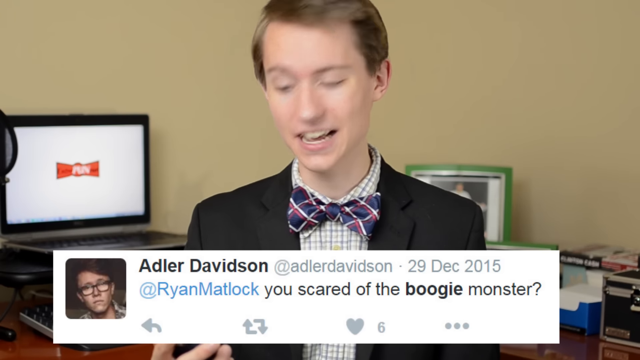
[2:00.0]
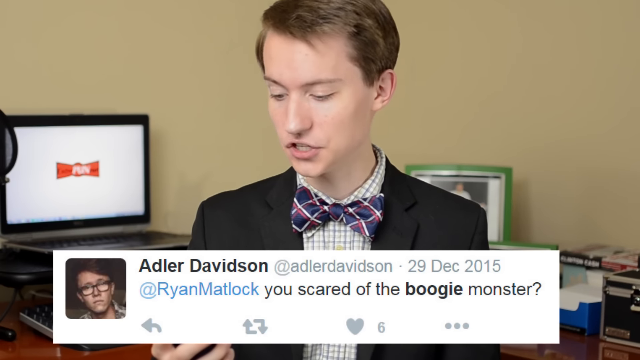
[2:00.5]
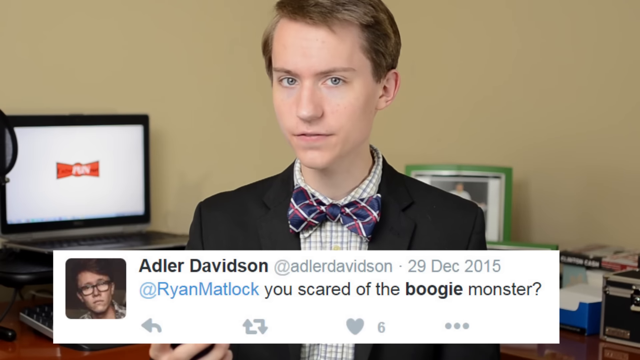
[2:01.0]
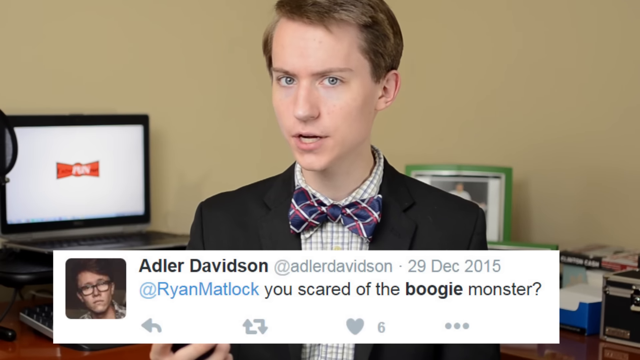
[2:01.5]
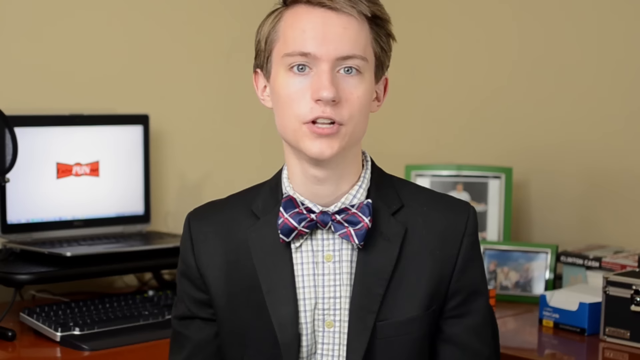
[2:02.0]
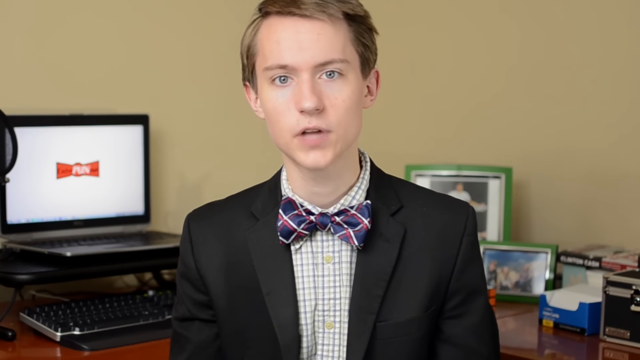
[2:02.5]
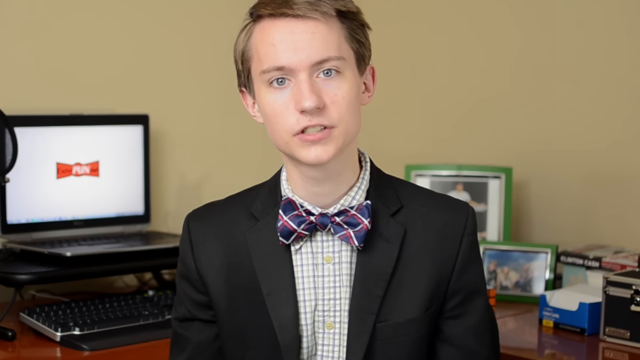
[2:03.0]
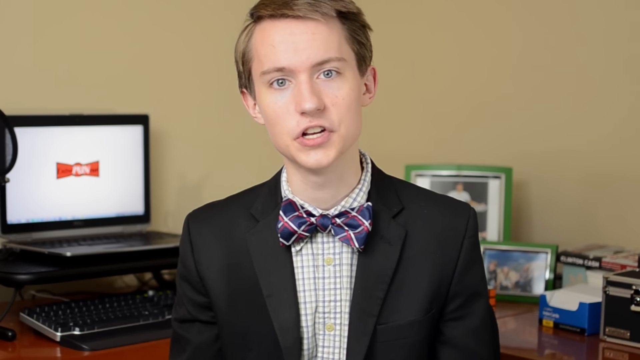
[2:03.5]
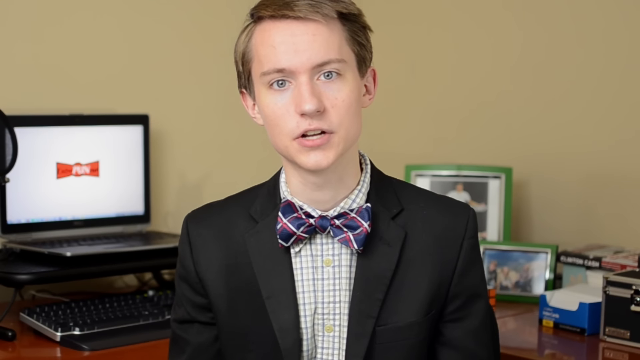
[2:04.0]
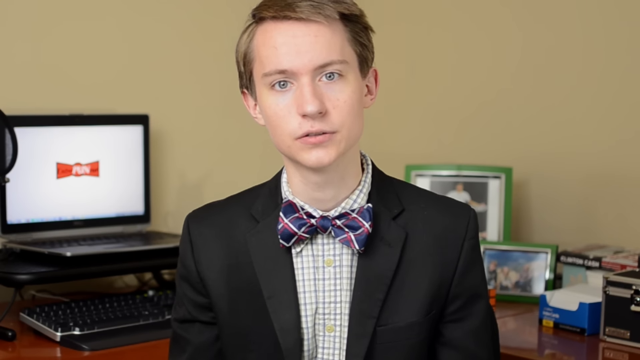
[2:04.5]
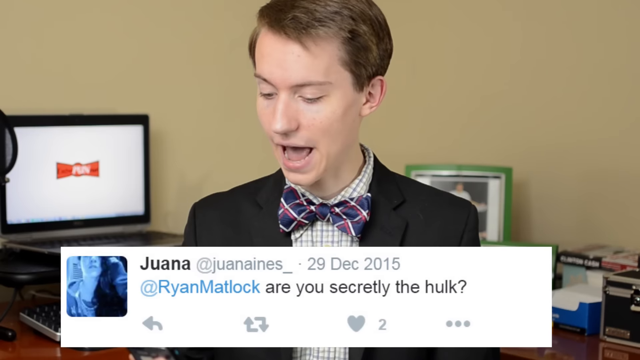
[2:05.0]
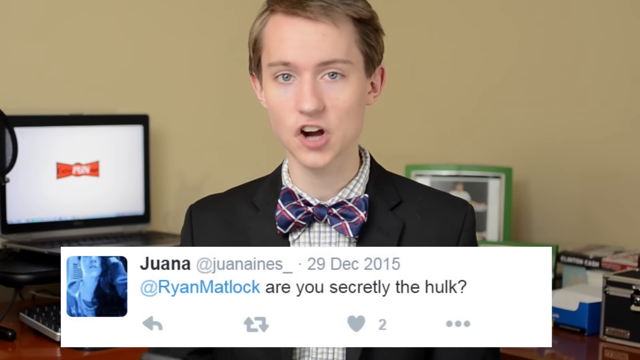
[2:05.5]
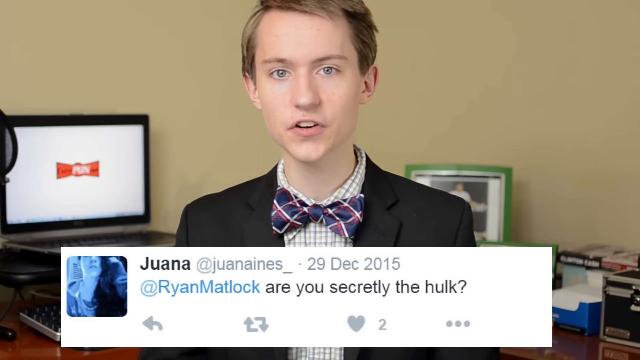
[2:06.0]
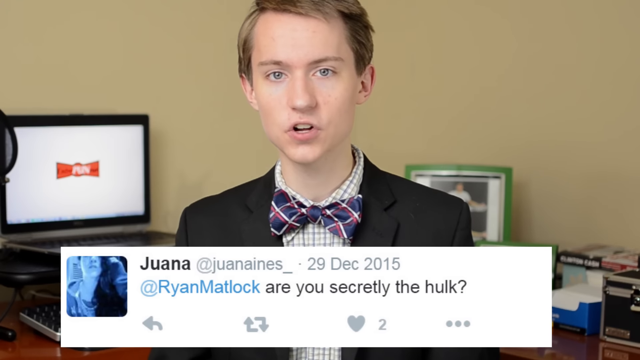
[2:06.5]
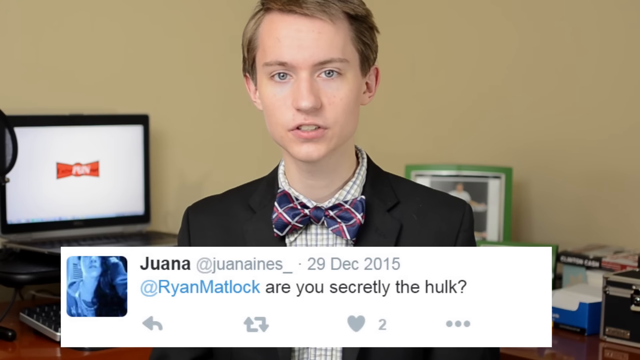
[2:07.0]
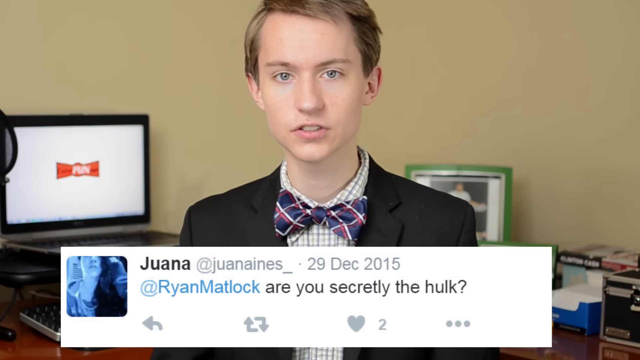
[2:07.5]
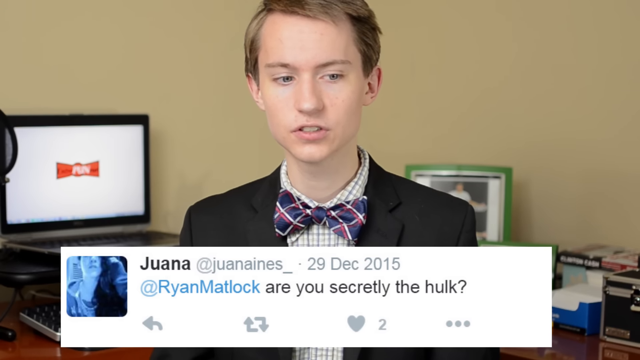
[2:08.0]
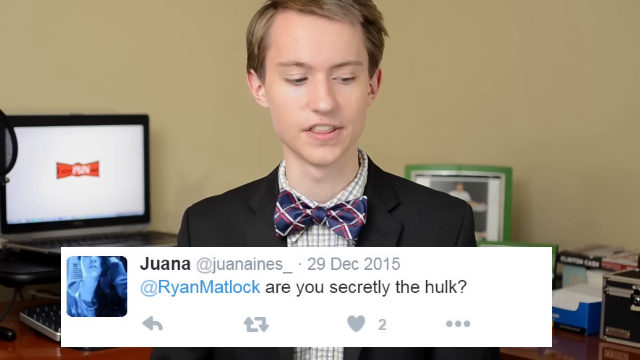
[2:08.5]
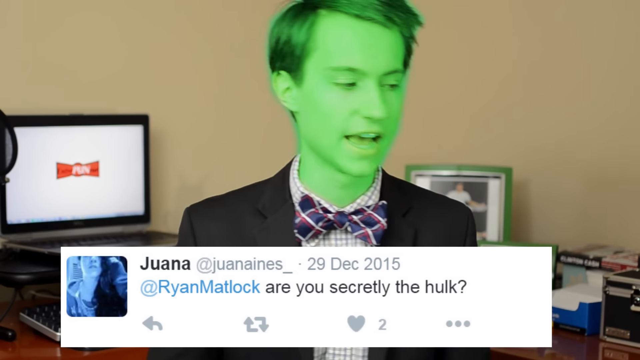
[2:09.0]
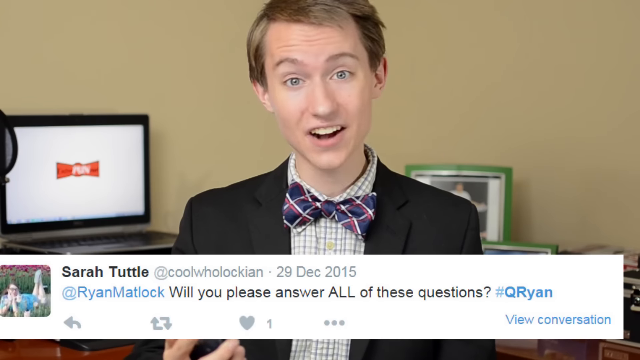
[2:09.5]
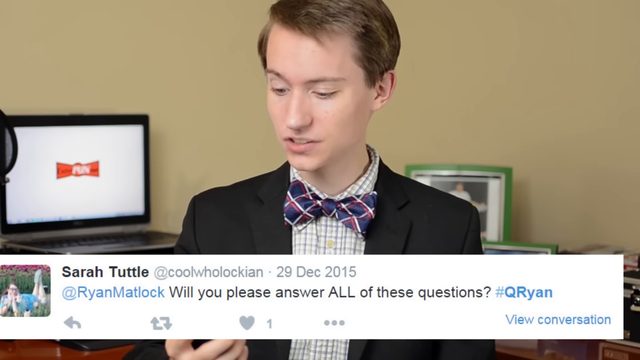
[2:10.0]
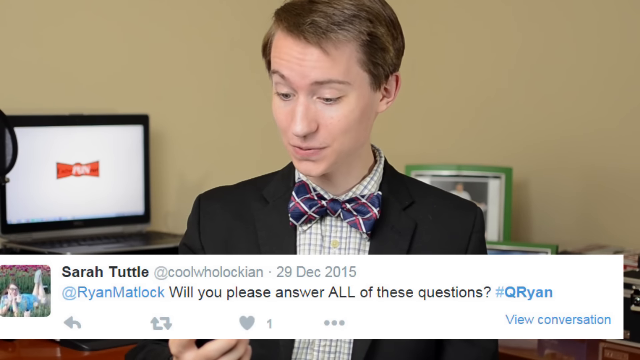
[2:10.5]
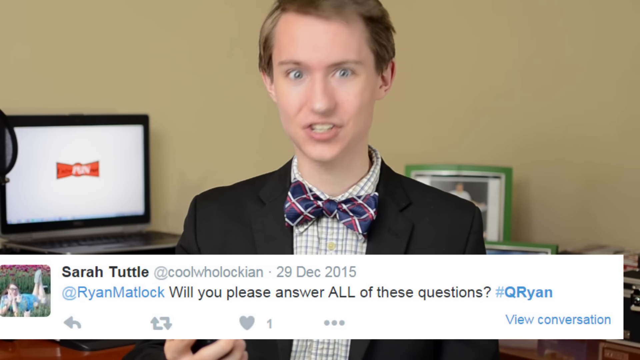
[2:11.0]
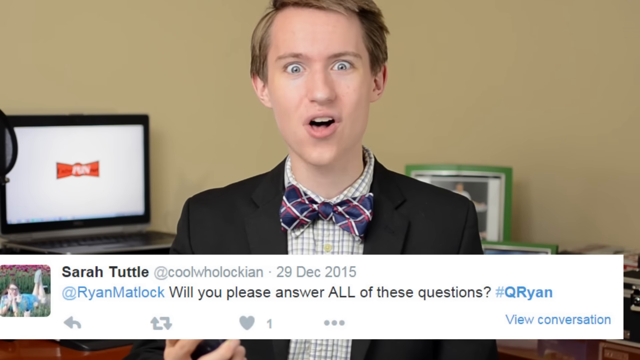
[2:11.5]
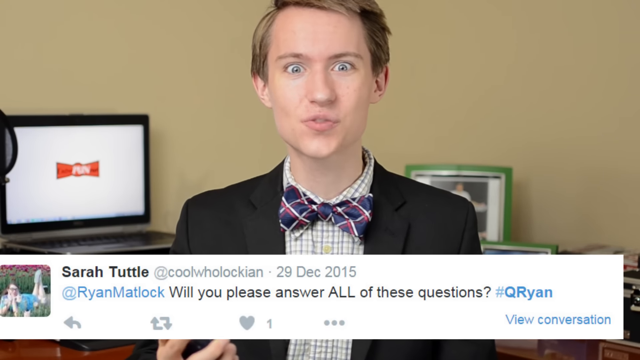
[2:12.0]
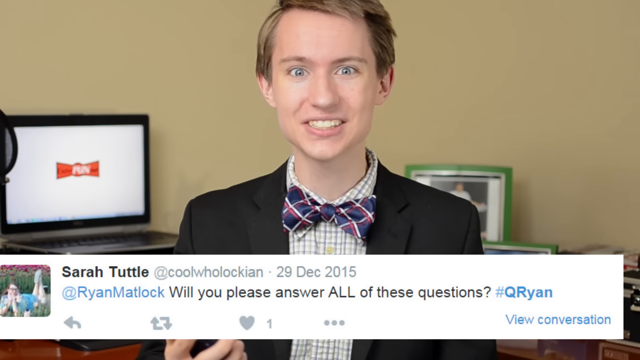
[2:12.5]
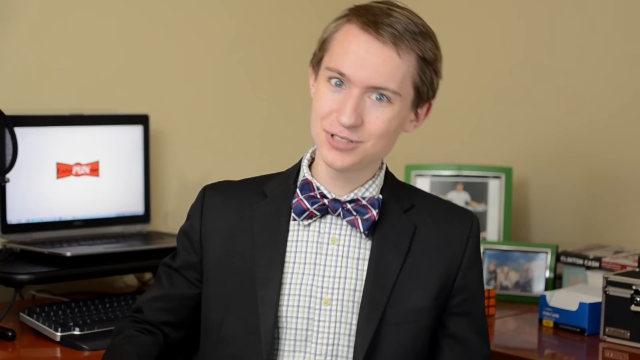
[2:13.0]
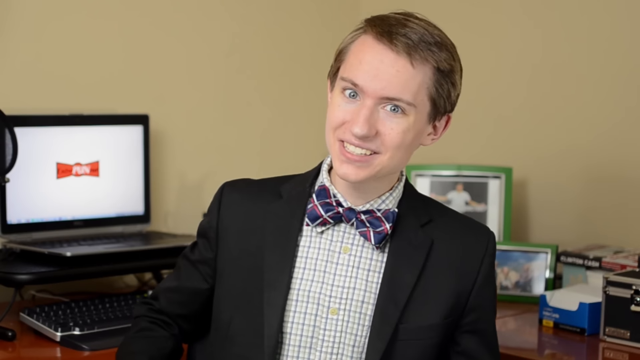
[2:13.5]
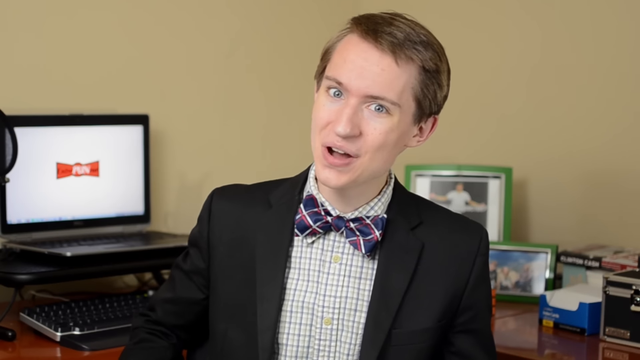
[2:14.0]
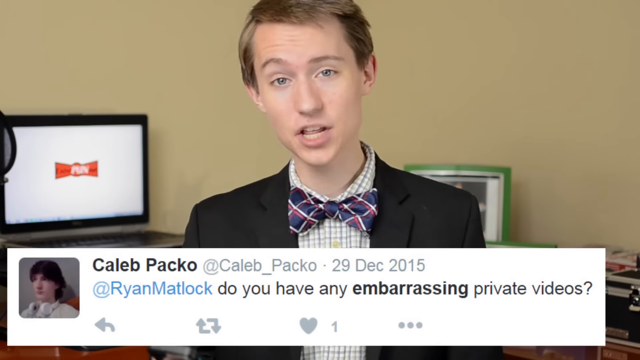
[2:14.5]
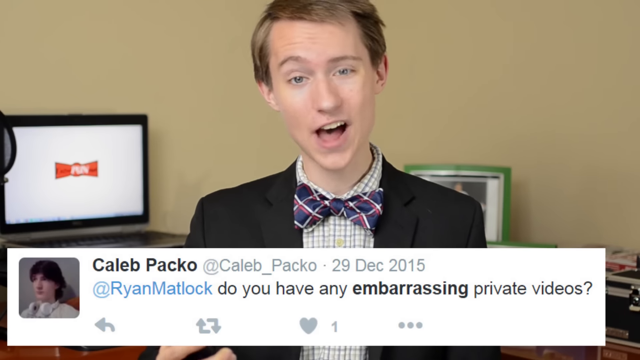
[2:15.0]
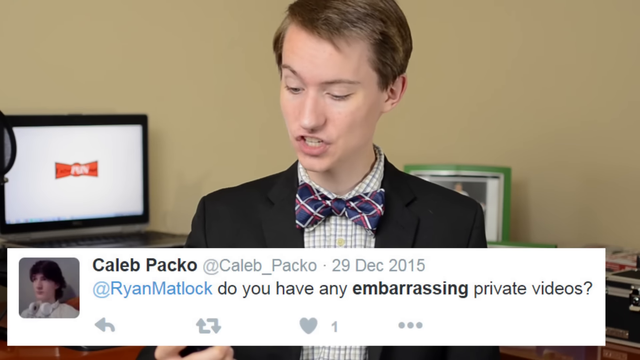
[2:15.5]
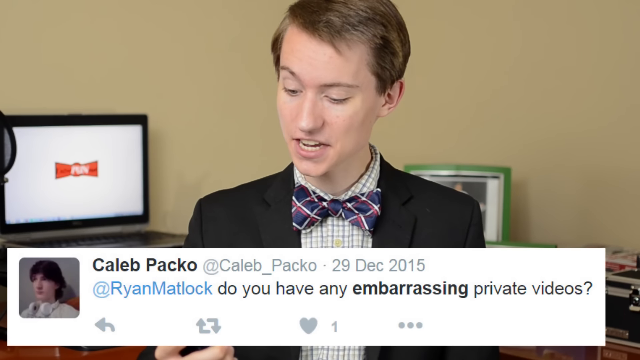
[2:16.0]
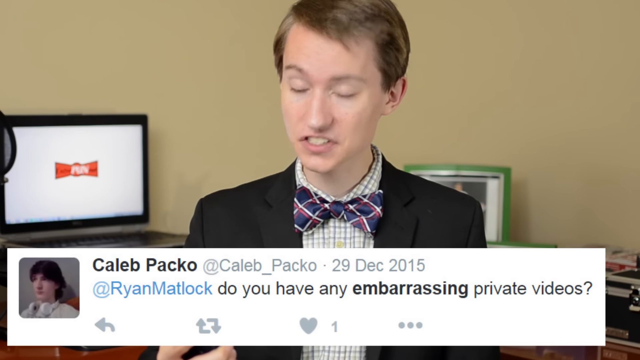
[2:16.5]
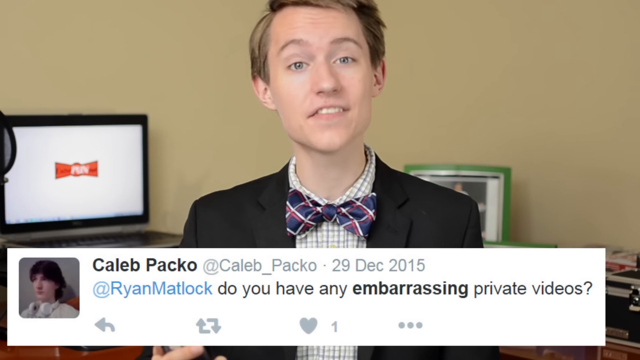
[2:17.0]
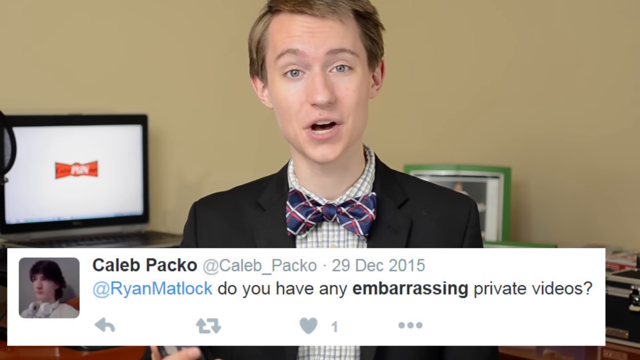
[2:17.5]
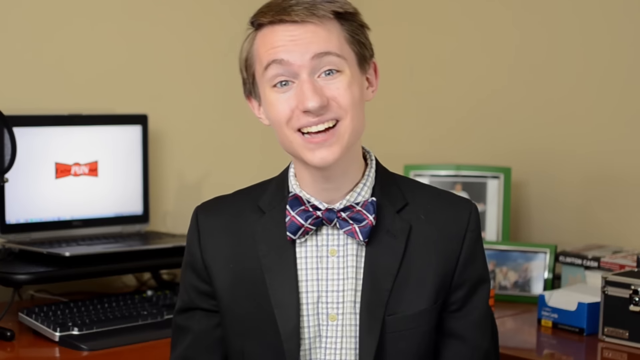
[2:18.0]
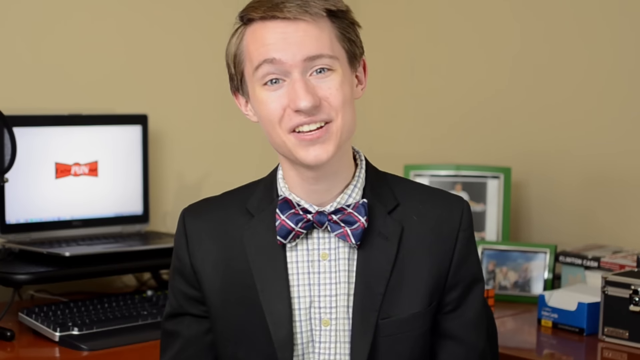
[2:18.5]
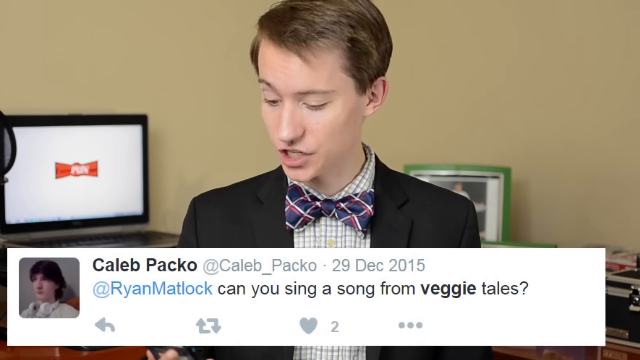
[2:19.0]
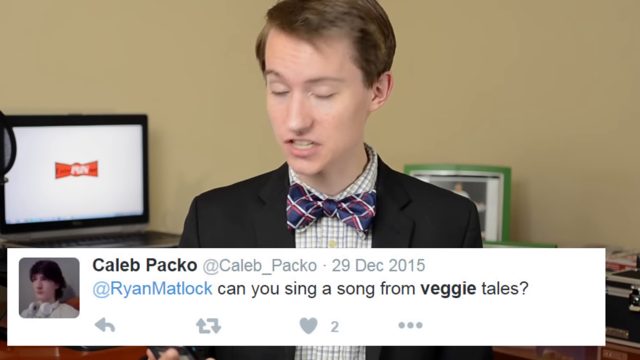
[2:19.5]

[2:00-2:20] In the same location, the young white man in his 20s, with short brown hair combed to the right, wears a black suit jacket, a white button-up dress shirt with gray stripes, and a dark blue bow tie with white and red stripes. A white rectangular box at the very bottom contains an image of a tweet: the name Adler Davidson at the top left with a small square profile picture, the date 29 December 2015 at the top right, and below, addressed to @Ryan Matlock, the question "you scared of the boogie monster". The man looks down to the bottom left, where he holds his phone in his right hand, then looks directly at the camera with a sort of serious expression. A new tweet appears at the bottom middle from Juana: "are you secretly the Hulk?" His face turns slightly green as he looks away. Another tweet appears at the bottom middle from Sarah Tuttle: "will you please answer all of these questions?" He looks down to the bottom left, then back up at the camera after reading it, with a very wide-eyed expression as he answers. A final tweet appears from Caleb Packo: "do you have any embarrassing private videos?" As he reads it, he looks up at the camera with a slight smile.